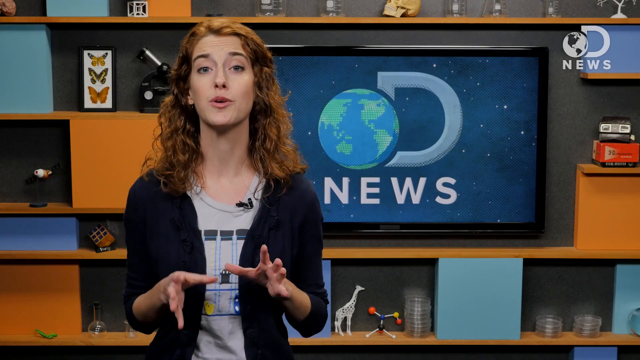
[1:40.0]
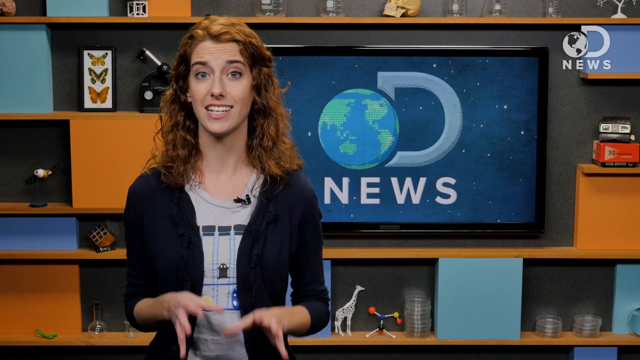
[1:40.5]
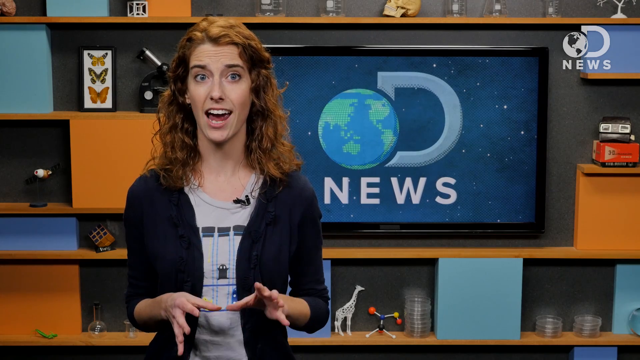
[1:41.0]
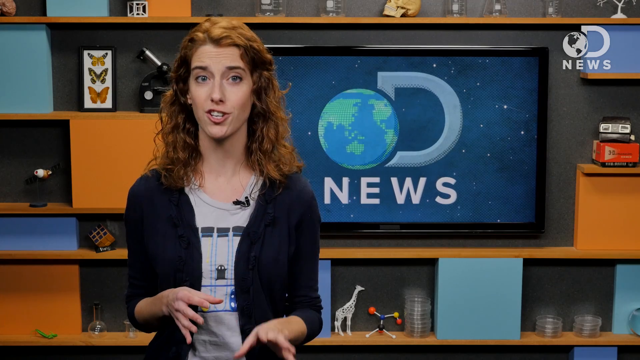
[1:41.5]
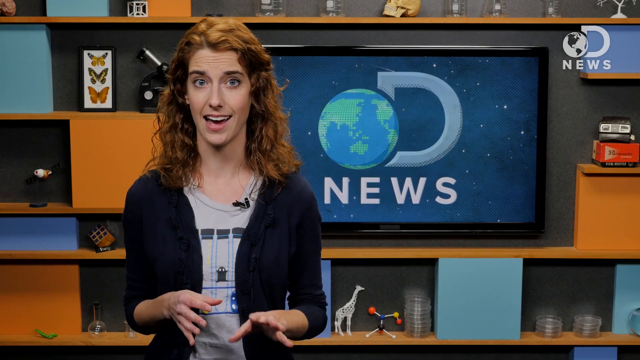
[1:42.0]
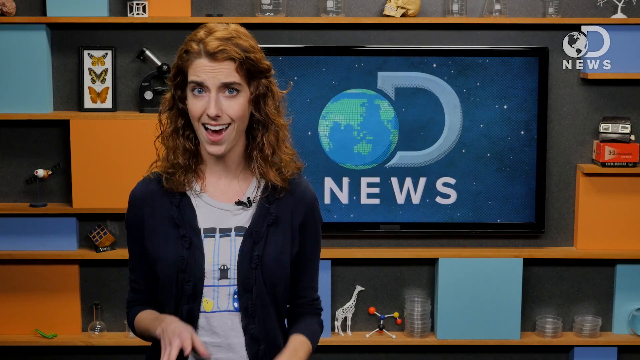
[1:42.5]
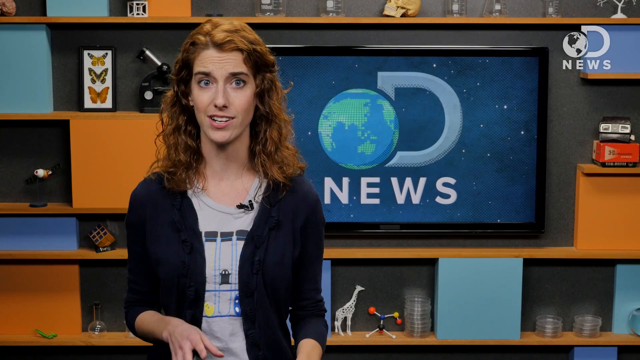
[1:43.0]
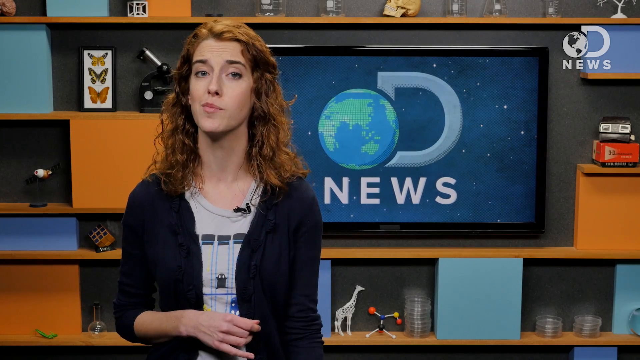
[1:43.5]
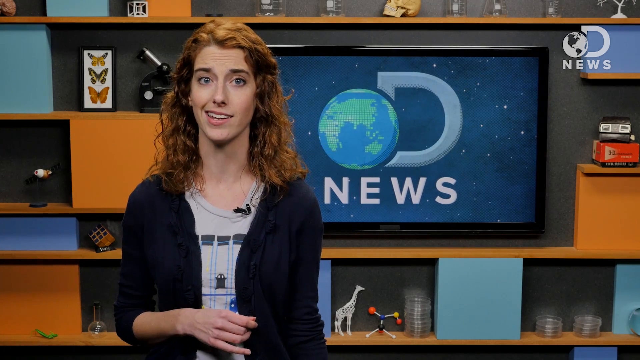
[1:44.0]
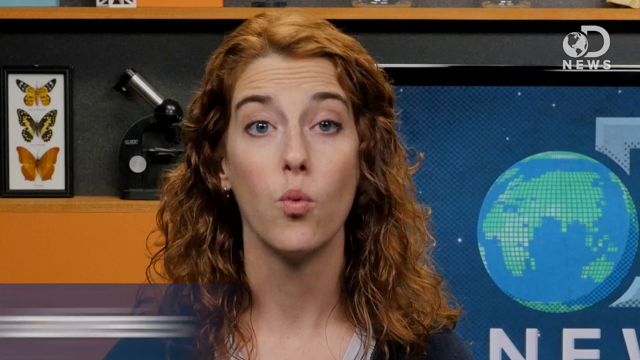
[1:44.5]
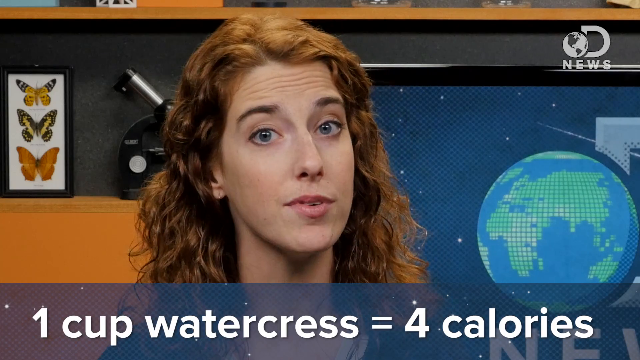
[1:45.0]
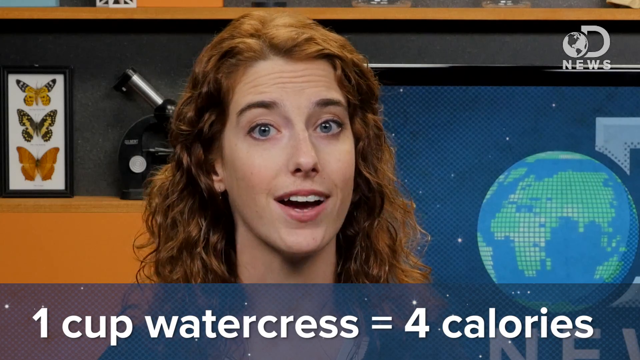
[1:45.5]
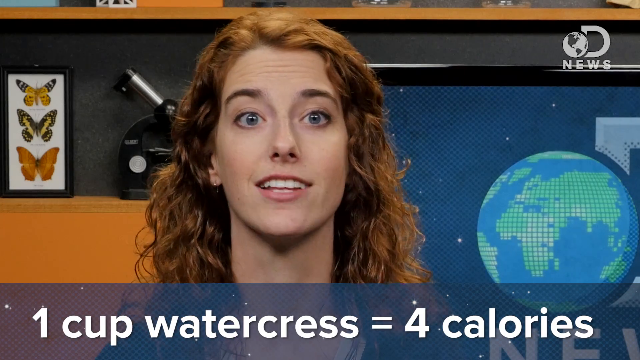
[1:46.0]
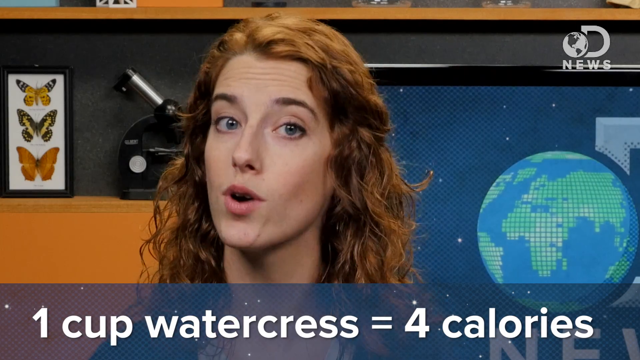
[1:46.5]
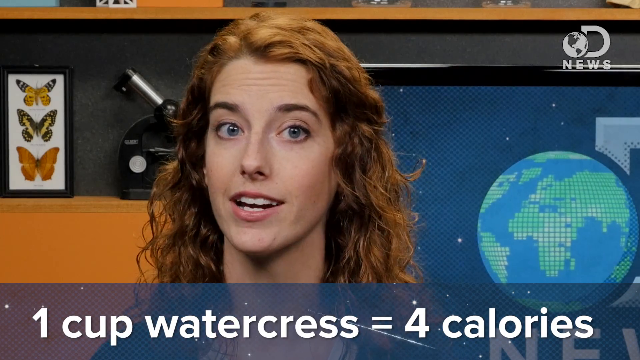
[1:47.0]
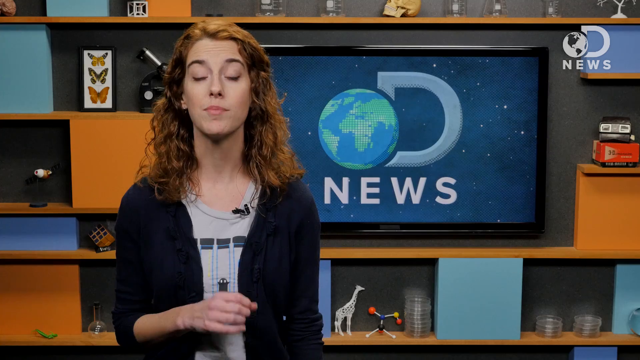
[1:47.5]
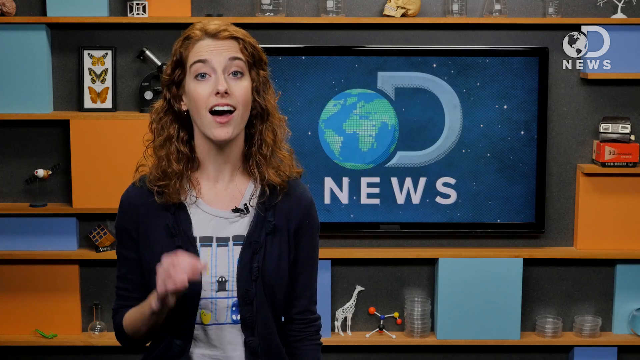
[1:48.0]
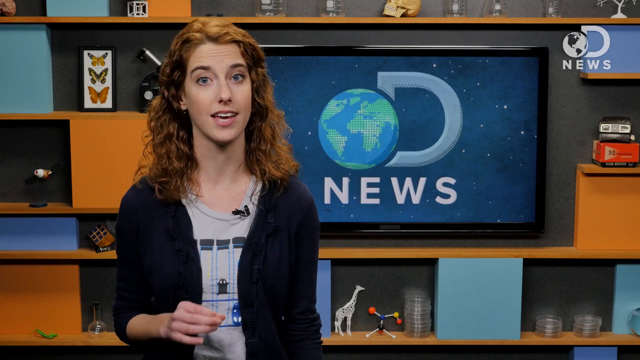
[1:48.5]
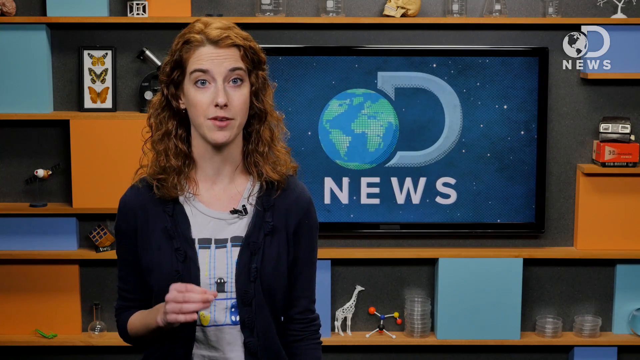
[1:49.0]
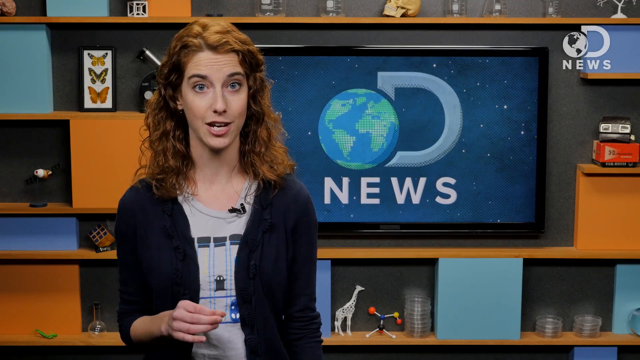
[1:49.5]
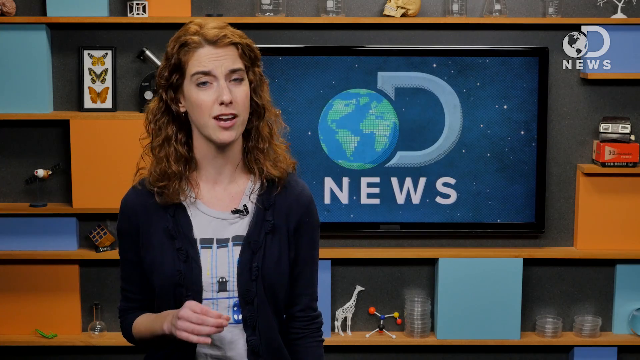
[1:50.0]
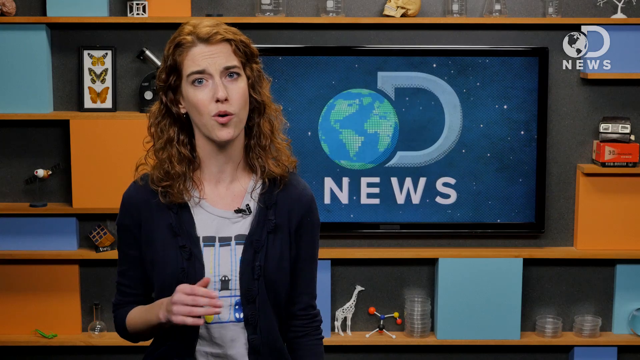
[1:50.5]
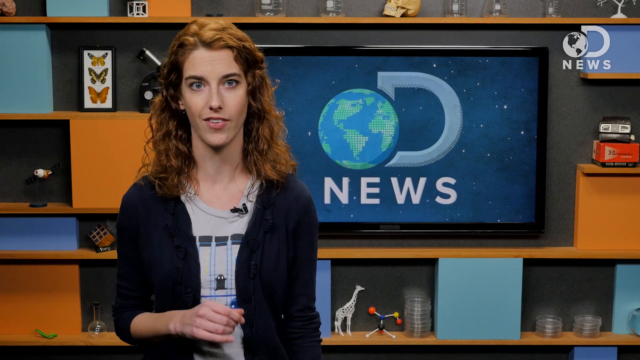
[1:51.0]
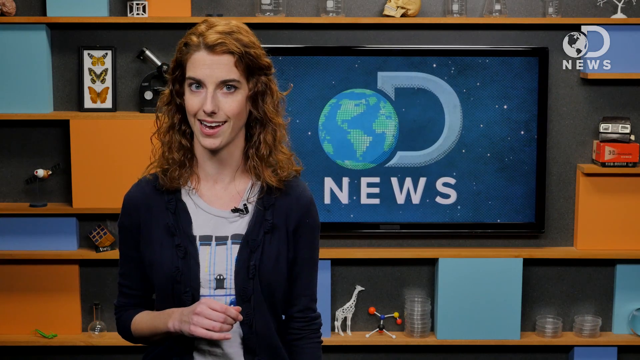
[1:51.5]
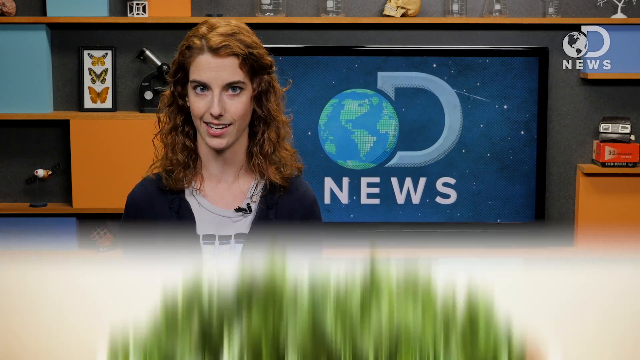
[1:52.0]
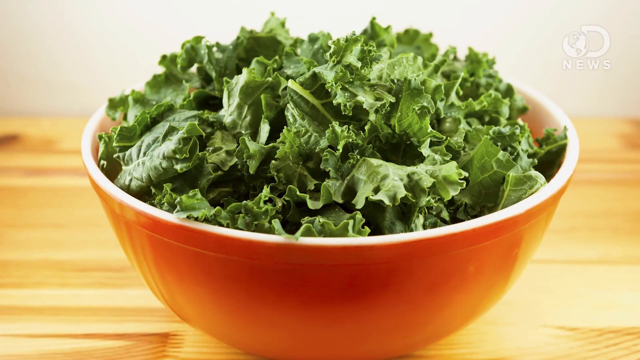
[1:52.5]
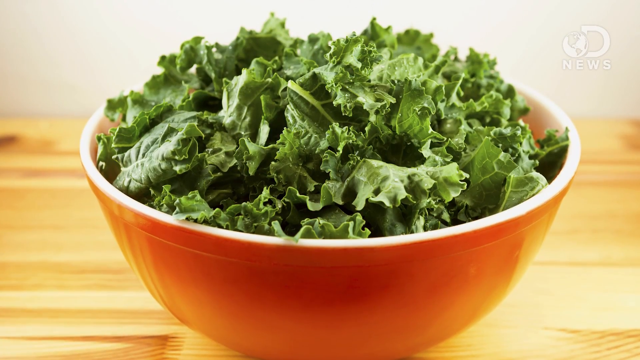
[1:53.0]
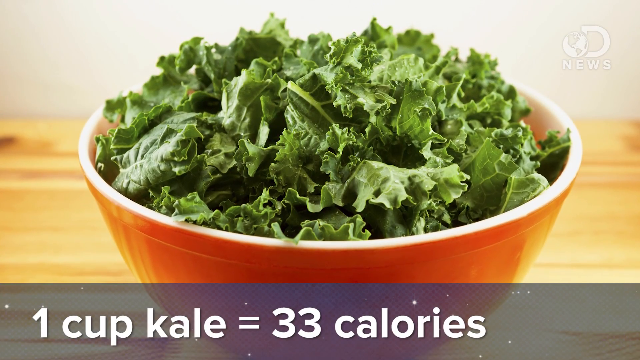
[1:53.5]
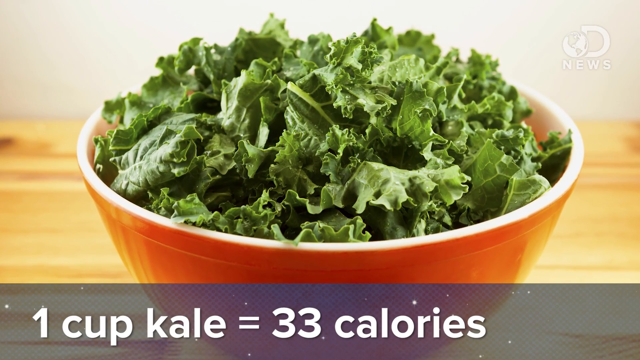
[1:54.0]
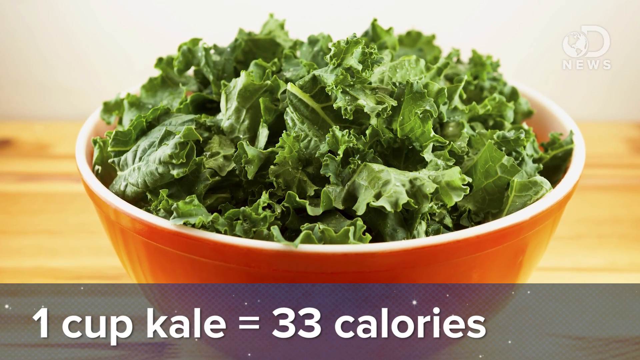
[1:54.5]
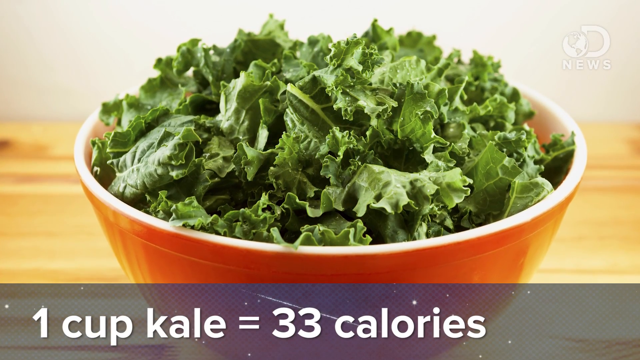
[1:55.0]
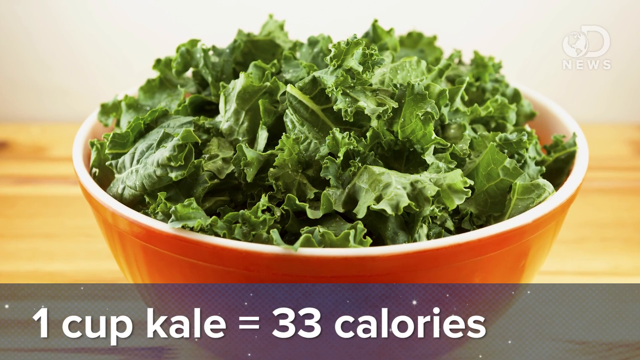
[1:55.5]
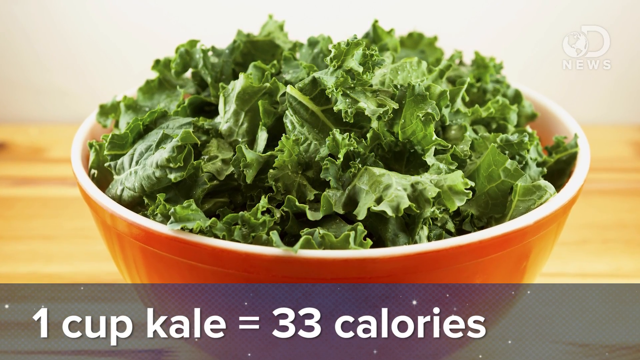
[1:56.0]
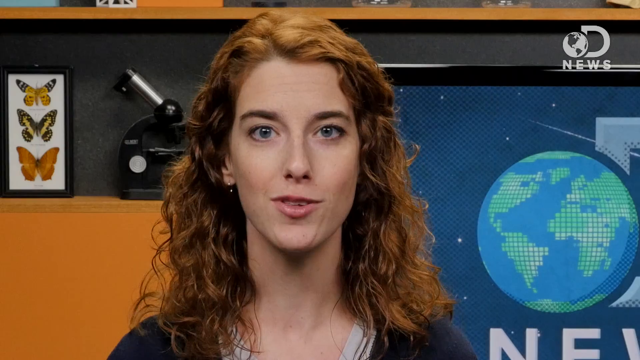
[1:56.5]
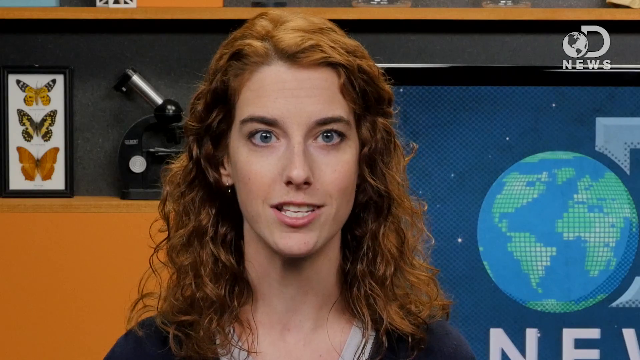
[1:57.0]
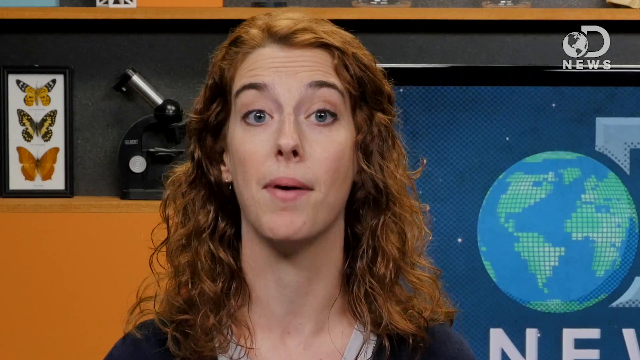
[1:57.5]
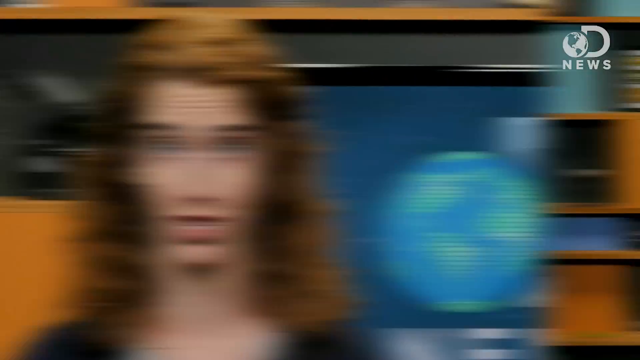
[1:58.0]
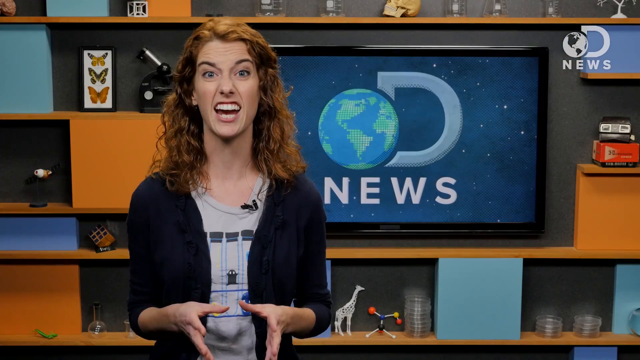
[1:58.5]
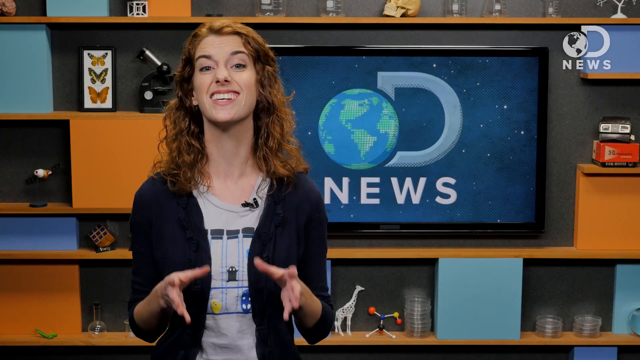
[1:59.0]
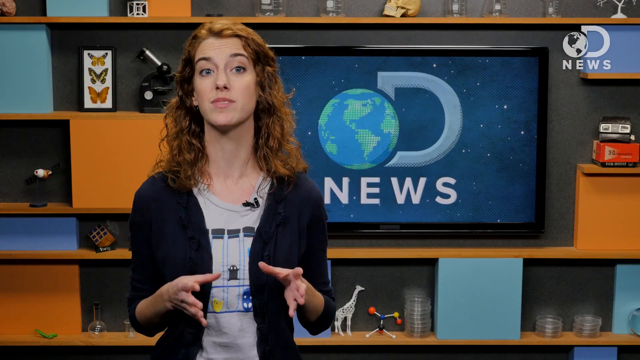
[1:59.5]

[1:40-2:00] A young white woman with red hair, white skin and blue eyes speaks directly to the camera; she is the only person in the video. She wears a black cardigan sweater layered over a grey t-shirt with some symbols or icons on it. She appears to be in a studio with graphics and colors such as light blue, orange and dark blue behind her. A large TV monitor over her left shoulder displays the word "news," with a spinning globe icon above it. She appears to be talking about the nutritional aspects of vegetables. Midway through, the camera pans to a close-up of a bowl of chopped kale, with the words "one cup kale equals 33 calories" below it. The camera then pans back to a close-up of the woman talking into the camera, and text appears stating that one cup of watercress equals 4 calories.